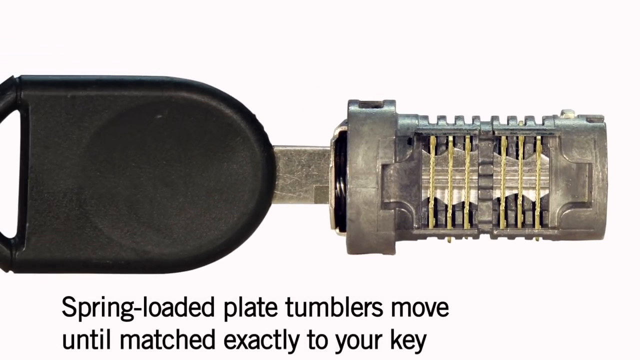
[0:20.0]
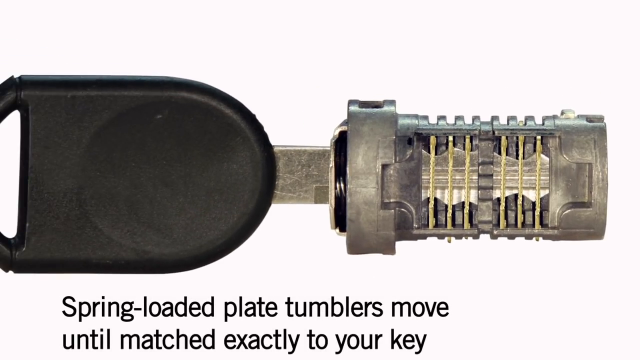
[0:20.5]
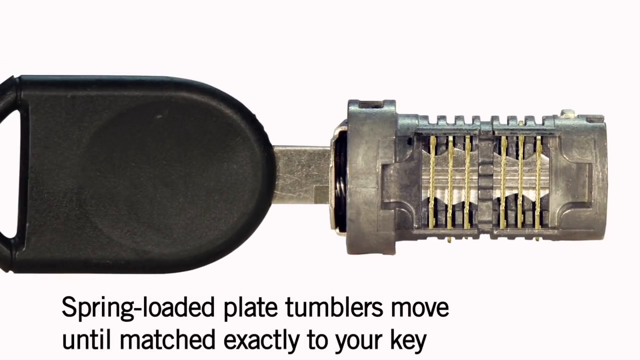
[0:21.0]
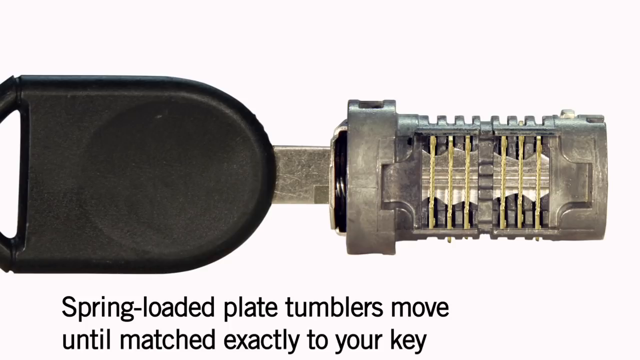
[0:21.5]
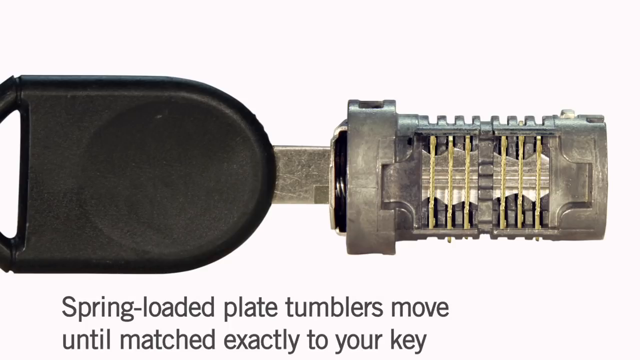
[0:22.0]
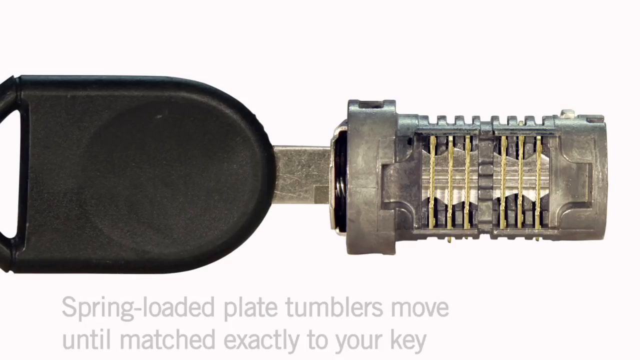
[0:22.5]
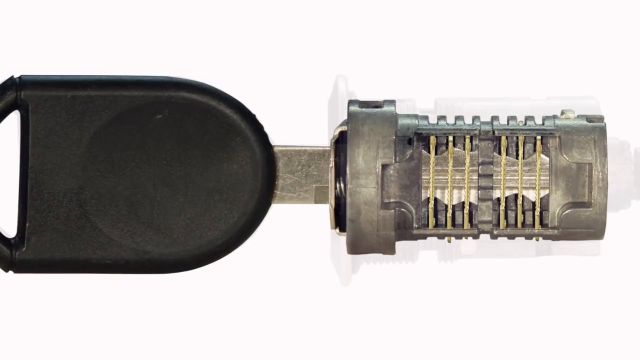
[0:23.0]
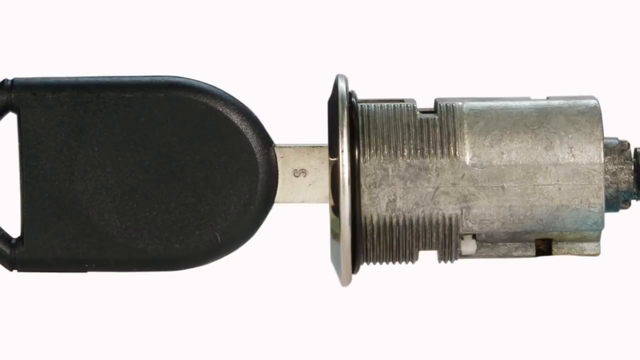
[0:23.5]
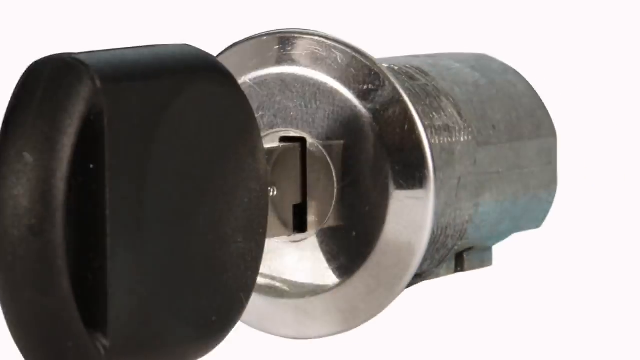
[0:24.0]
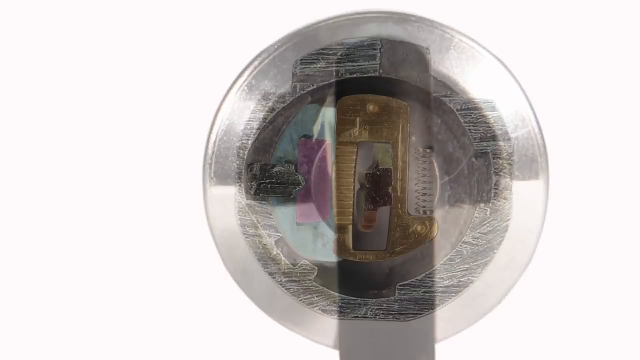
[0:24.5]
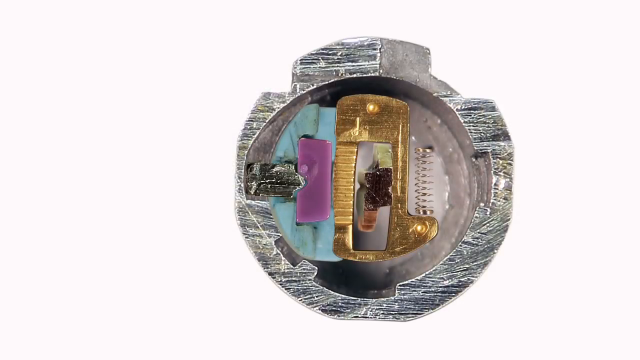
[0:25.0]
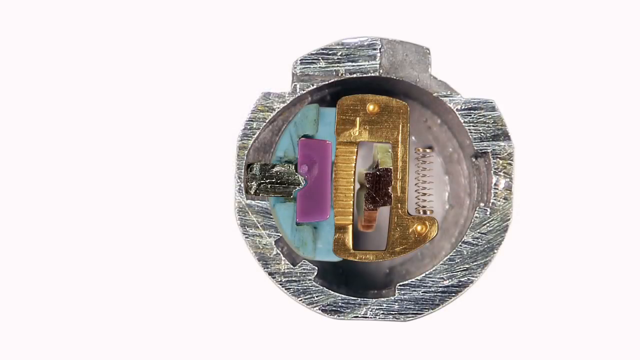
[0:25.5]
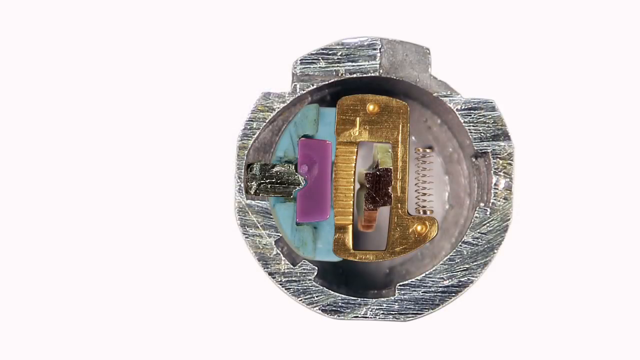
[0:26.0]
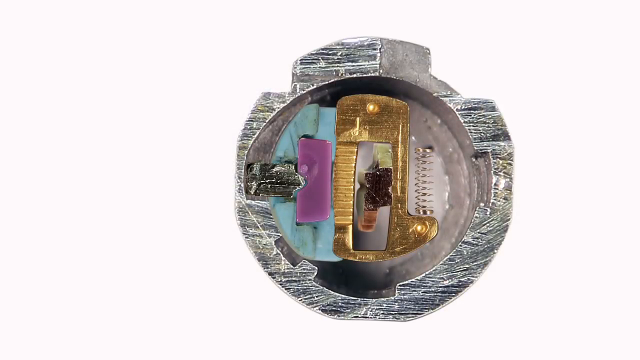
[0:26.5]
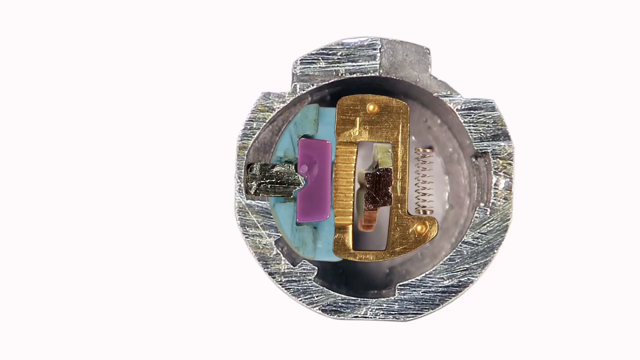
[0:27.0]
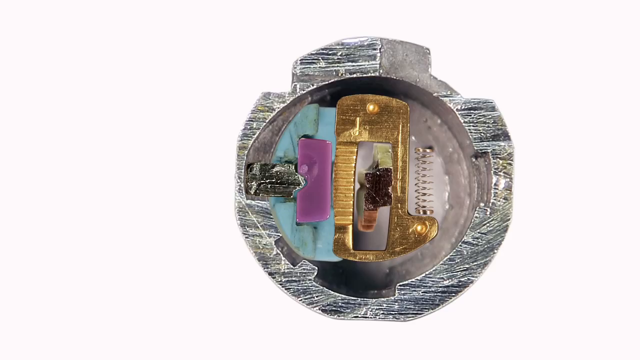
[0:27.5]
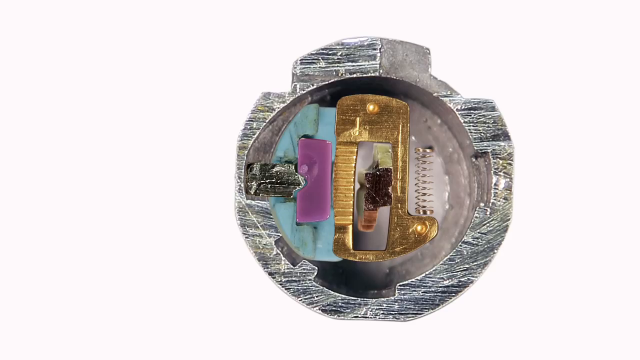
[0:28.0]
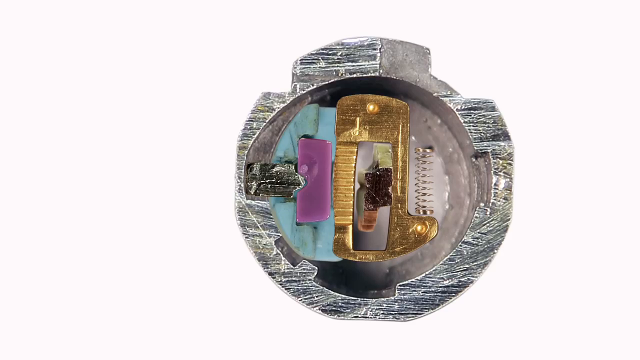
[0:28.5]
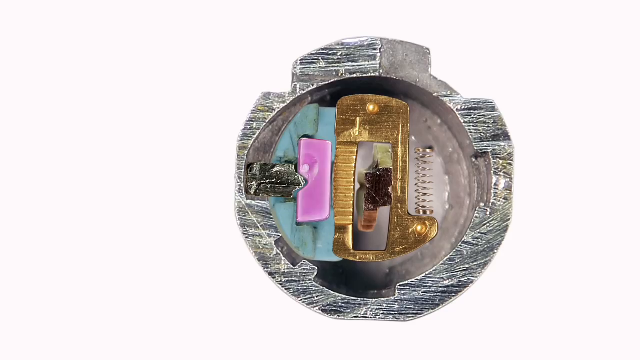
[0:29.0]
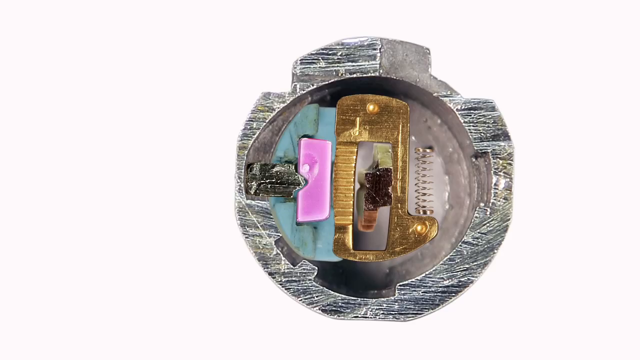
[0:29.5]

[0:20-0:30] The spring-loaded plate tumblers move inside the lock. The view then transitions from the side of the lock to a screen showing the front of the lock with all of its mechanical parts, along with the back side of the key. The parts are not fully labeled, but each subsection is color-coded to distinguish each individual mechanism of the lock and how the key turns inside it.